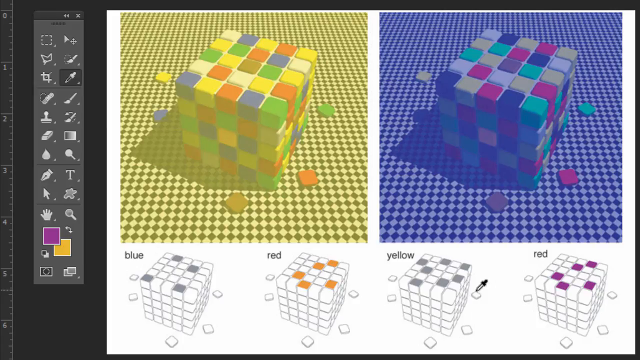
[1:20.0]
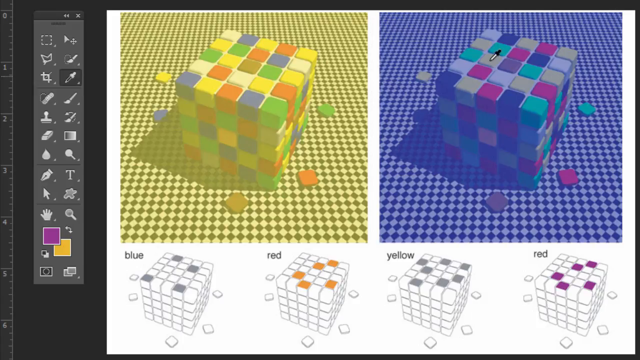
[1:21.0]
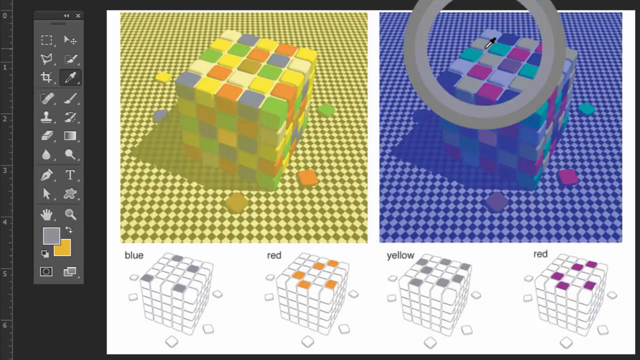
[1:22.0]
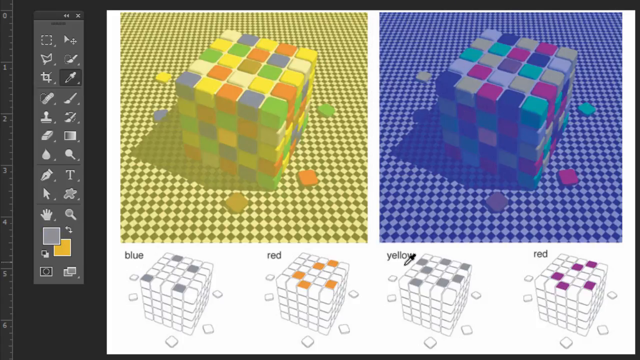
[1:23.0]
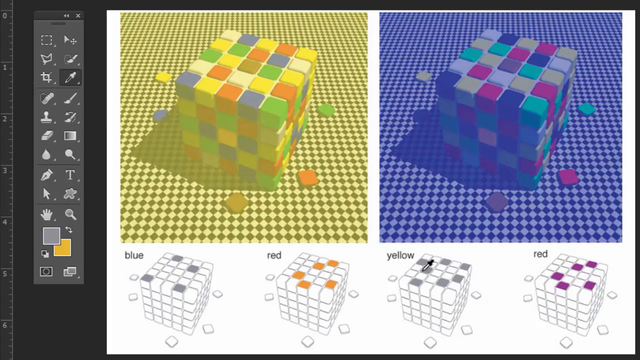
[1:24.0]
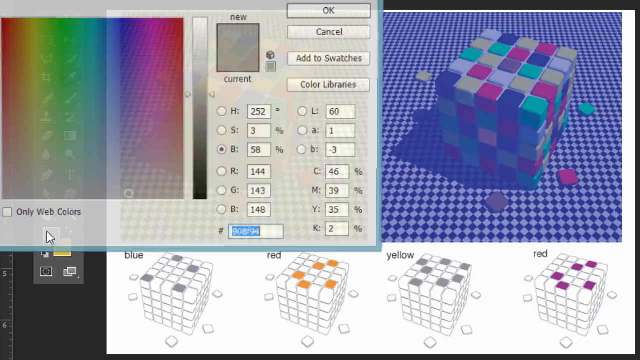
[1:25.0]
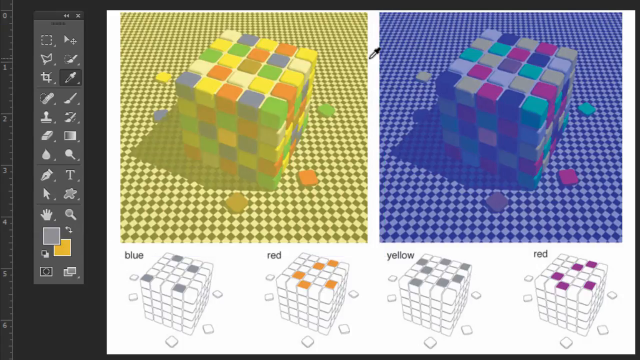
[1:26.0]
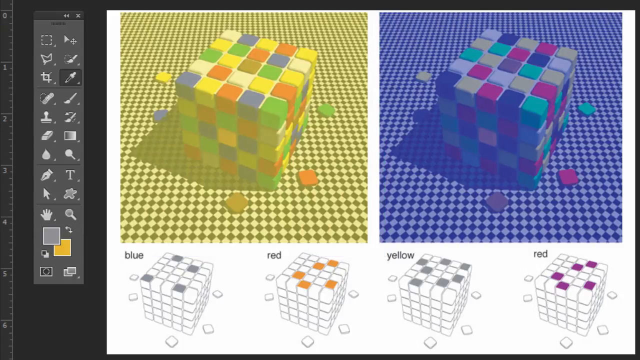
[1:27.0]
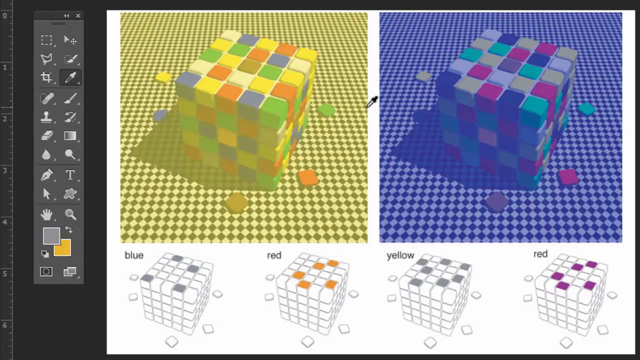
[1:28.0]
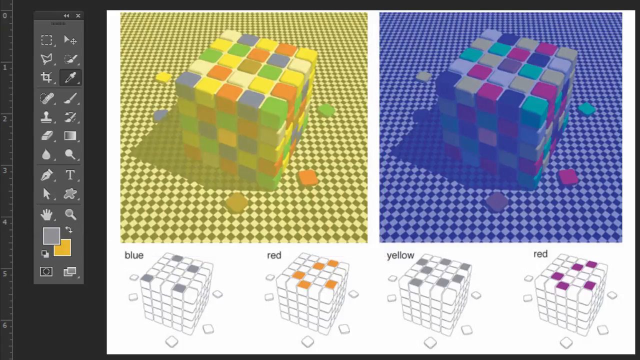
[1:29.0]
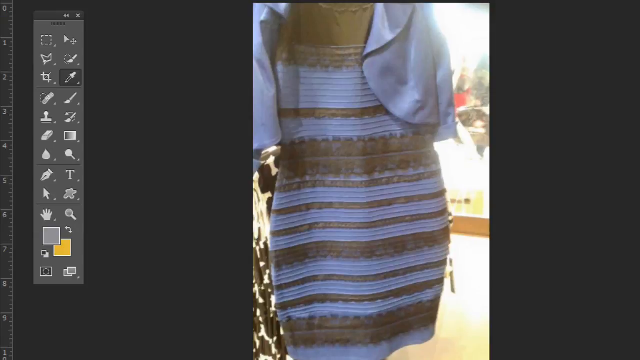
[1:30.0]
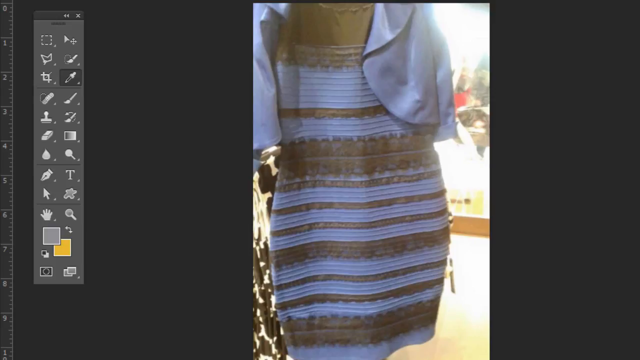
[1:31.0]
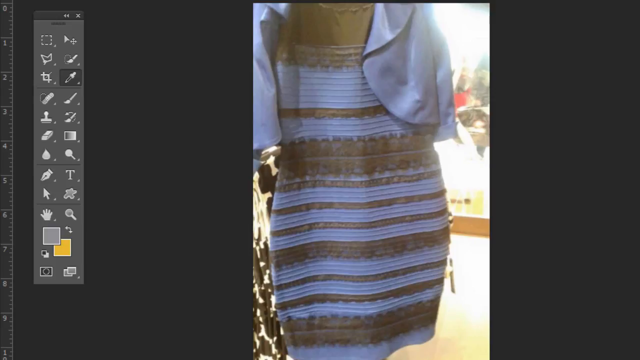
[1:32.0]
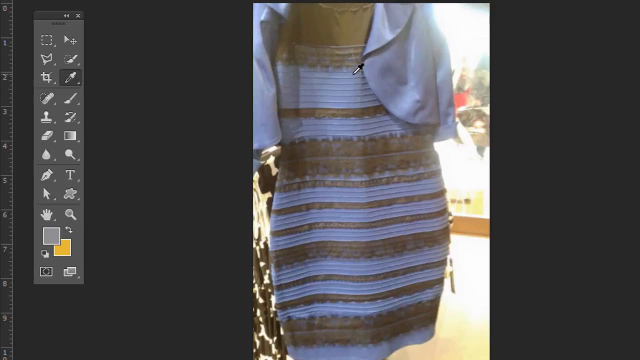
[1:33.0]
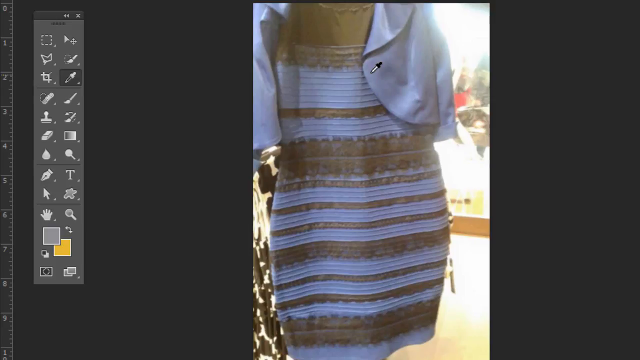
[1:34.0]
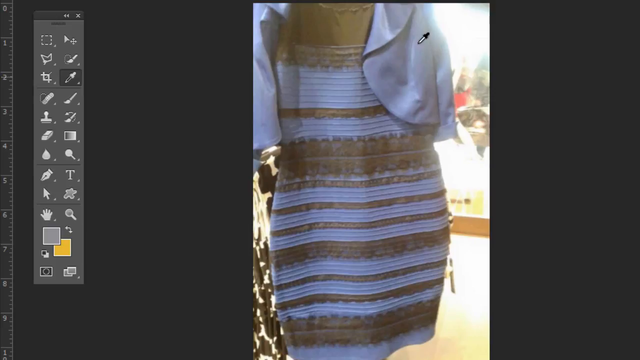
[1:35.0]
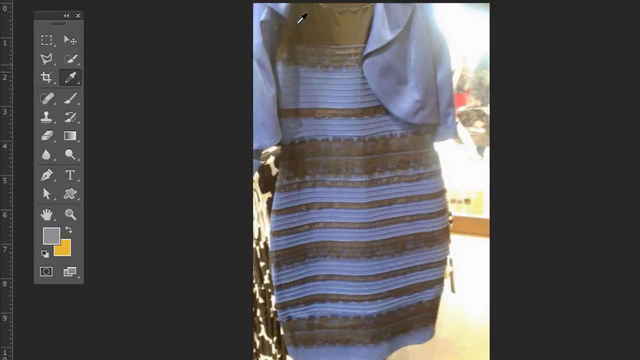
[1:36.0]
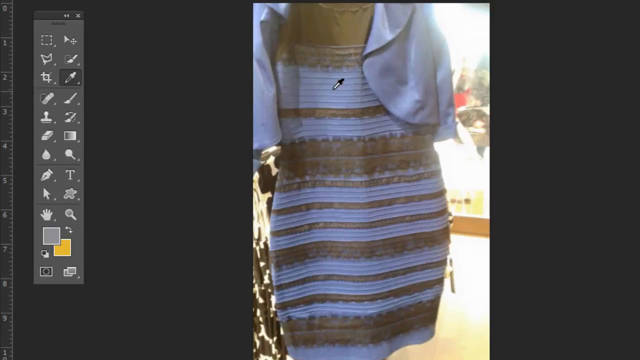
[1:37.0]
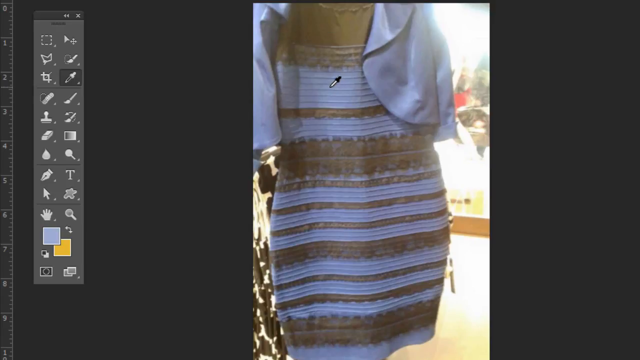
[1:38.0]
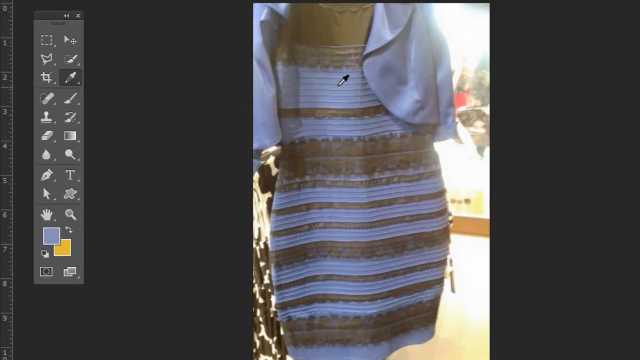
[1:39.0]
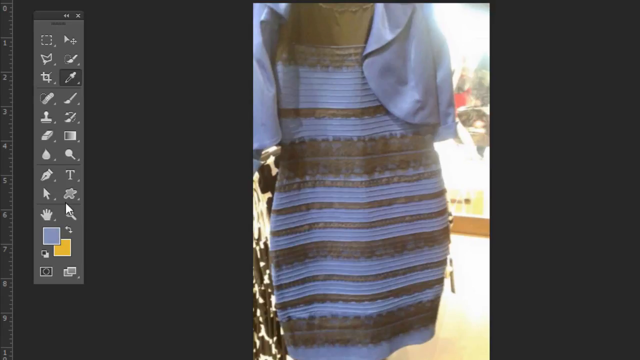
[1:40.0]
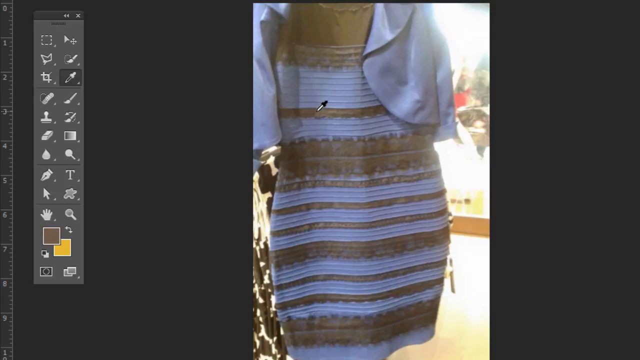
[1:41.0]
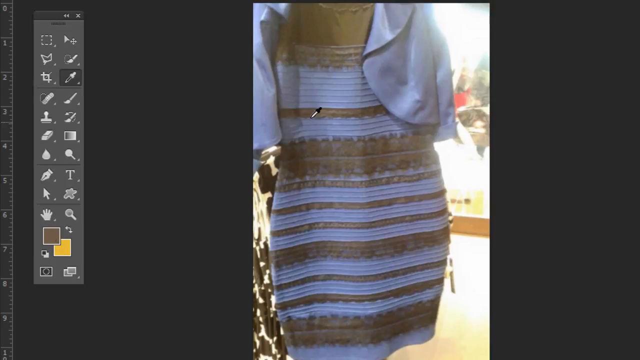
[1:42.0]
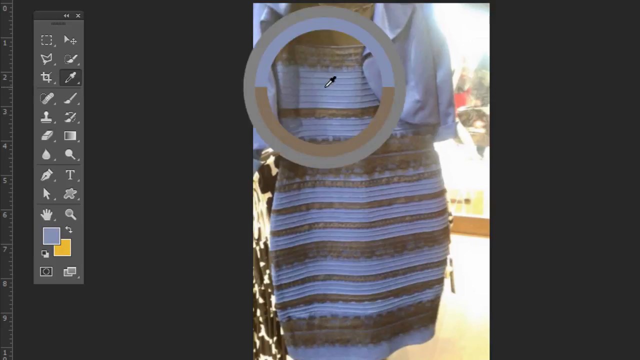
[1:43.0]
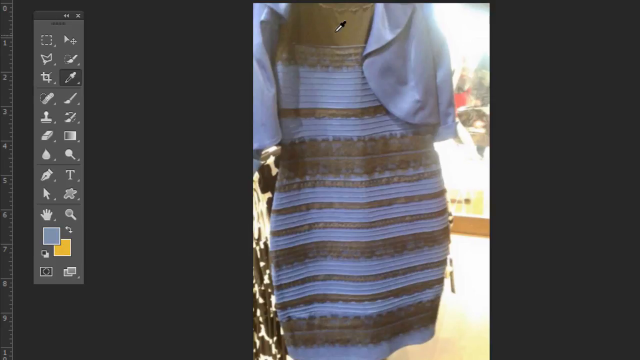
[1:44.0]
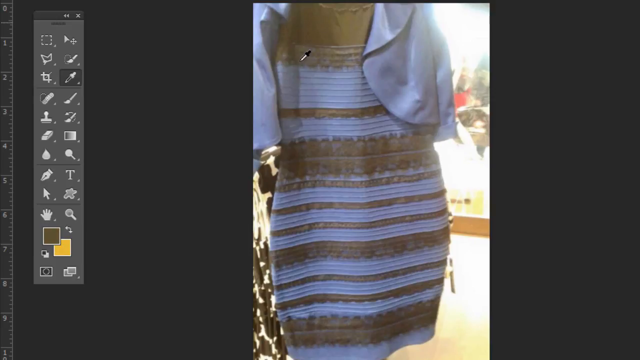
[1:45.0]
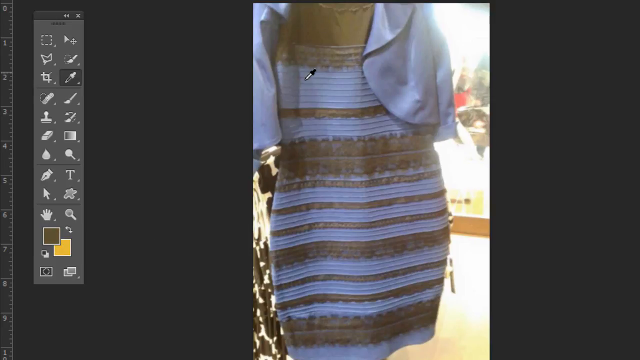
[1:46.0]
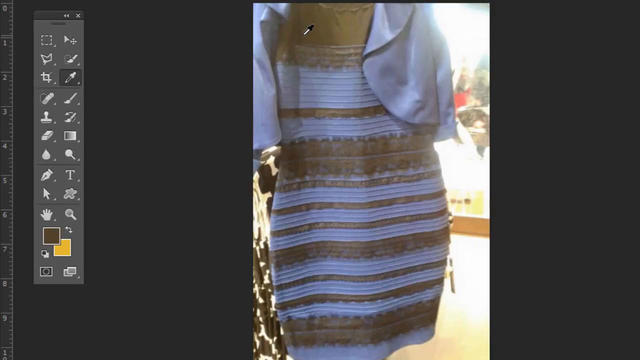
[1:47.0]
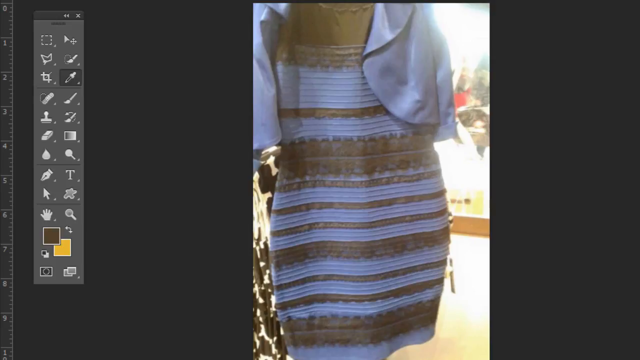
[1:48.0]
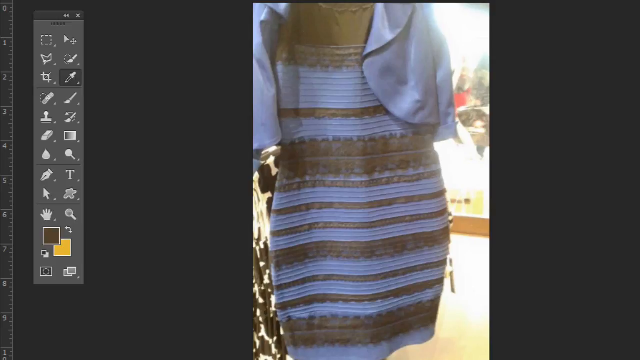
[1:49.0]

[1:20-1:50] The view remains in Photoshop, with the toolbar open on the left side, a little of the ruler visible, and the color picker open. There are two Rubik's Cube-like figures and diagrams with many colors, the left with a yellow overlay and the right with a blue overlay, and a diagram of the affected colors at the bottom. The user selects the yellow area, which comes out almost gray because of the overlay. The user then goes back to the dress and clicks on the middle, which comes up a light bluish color, while the top is not black but closer to brown.